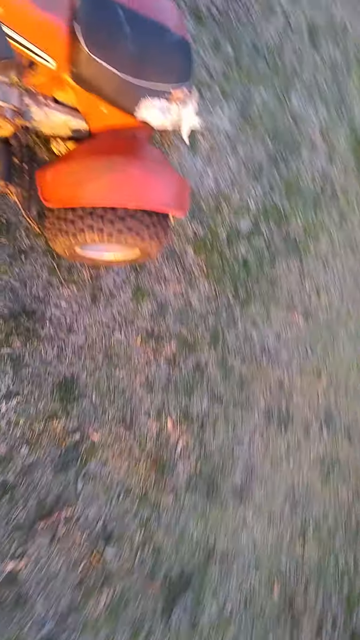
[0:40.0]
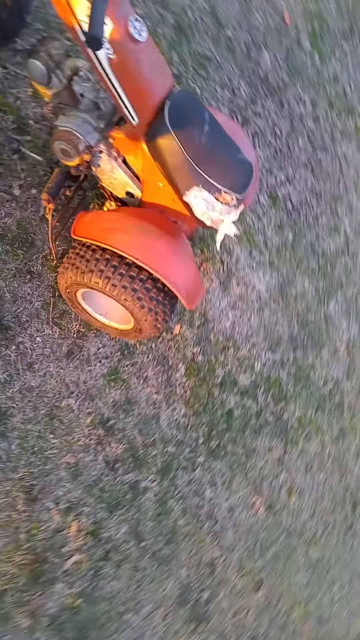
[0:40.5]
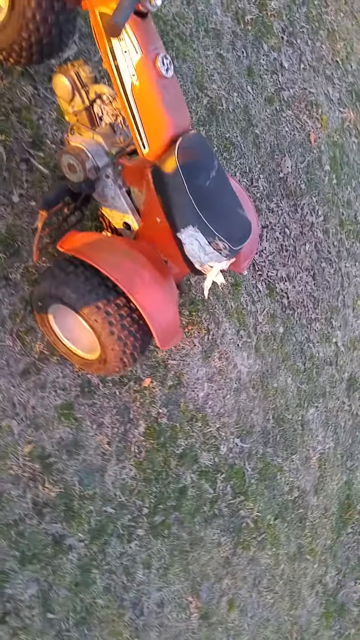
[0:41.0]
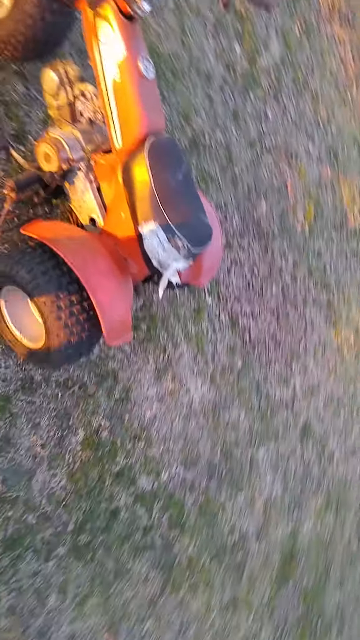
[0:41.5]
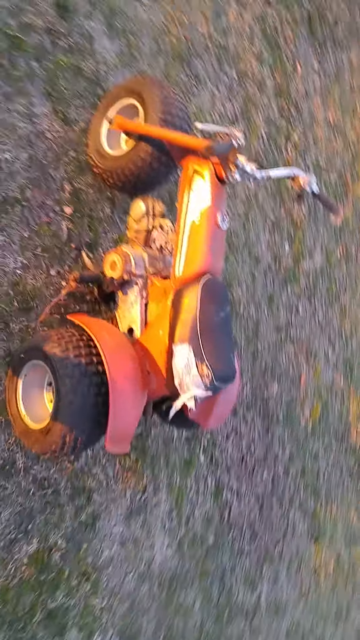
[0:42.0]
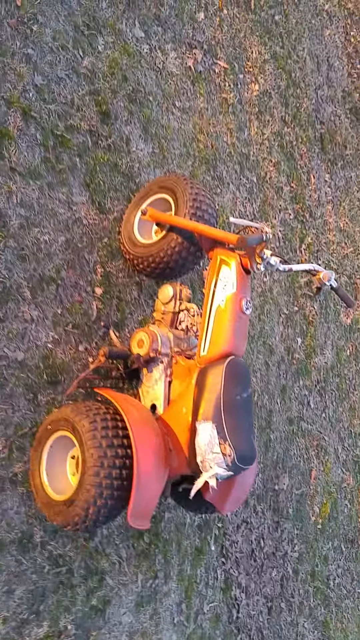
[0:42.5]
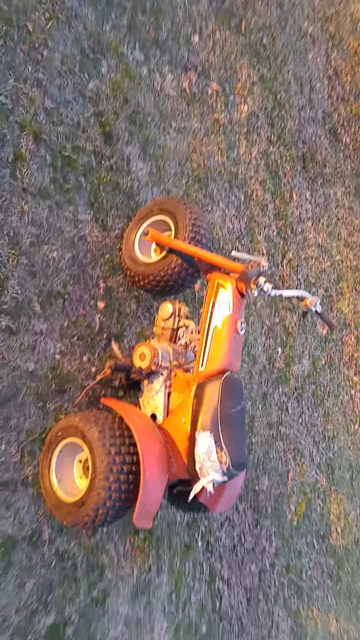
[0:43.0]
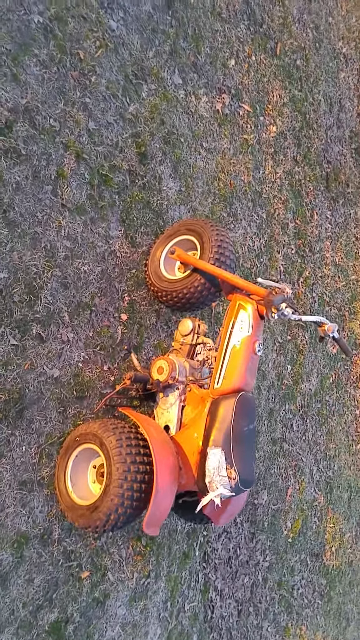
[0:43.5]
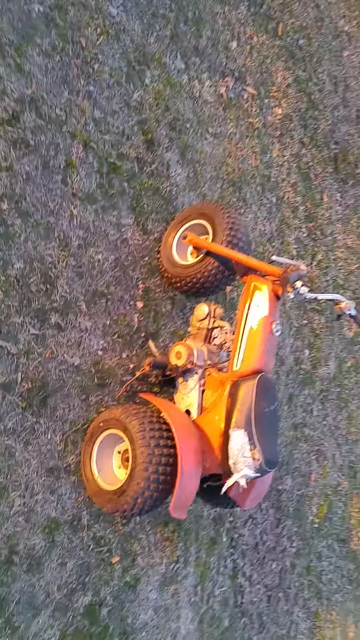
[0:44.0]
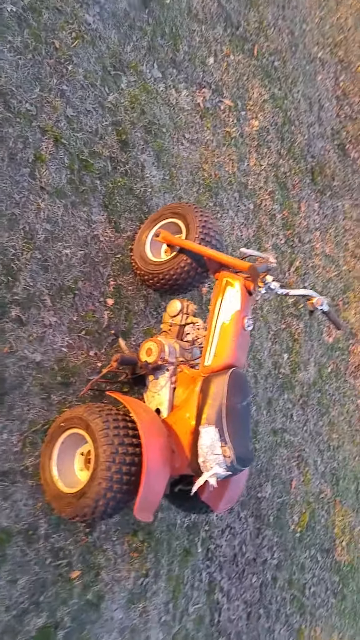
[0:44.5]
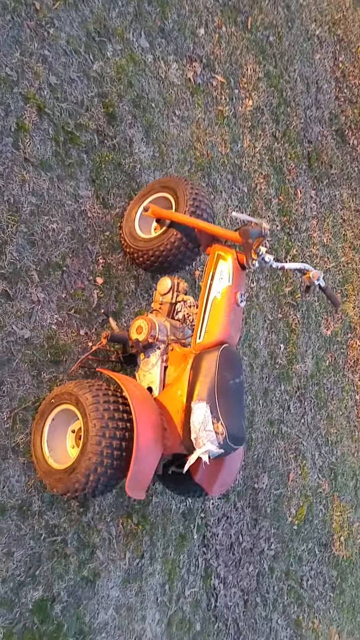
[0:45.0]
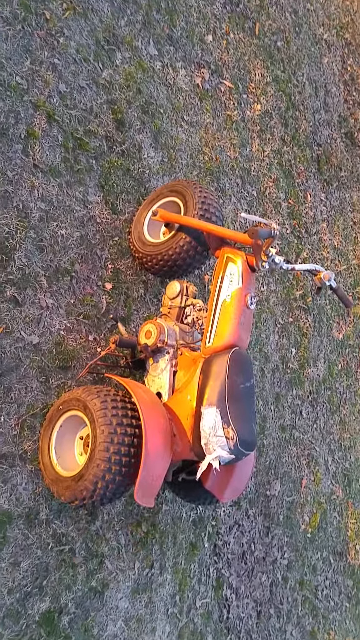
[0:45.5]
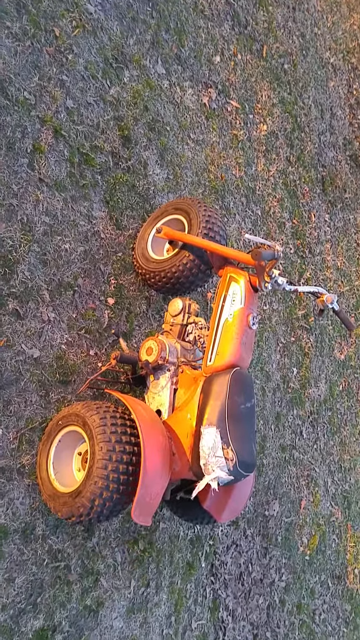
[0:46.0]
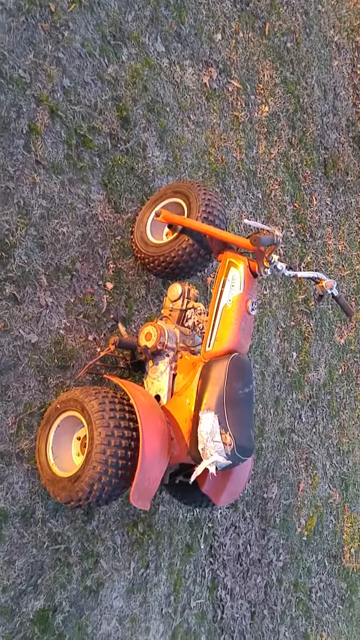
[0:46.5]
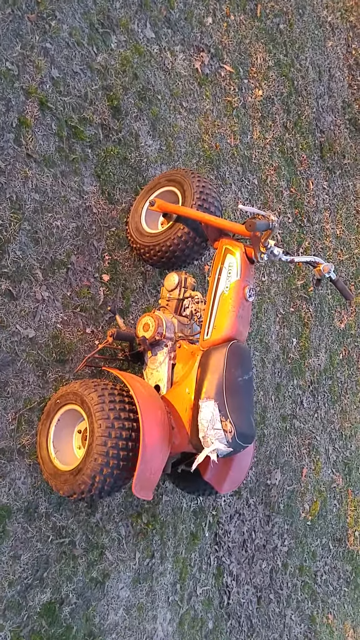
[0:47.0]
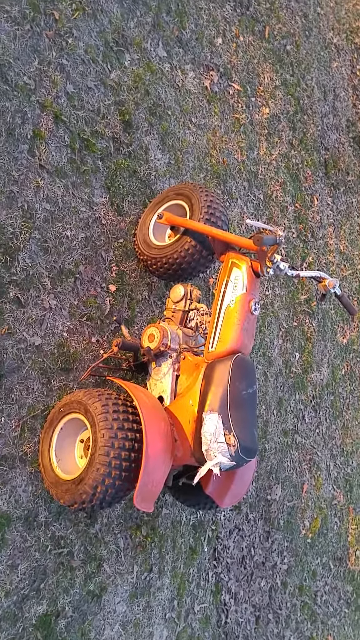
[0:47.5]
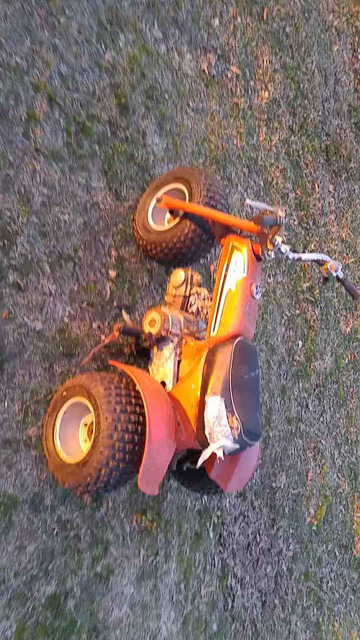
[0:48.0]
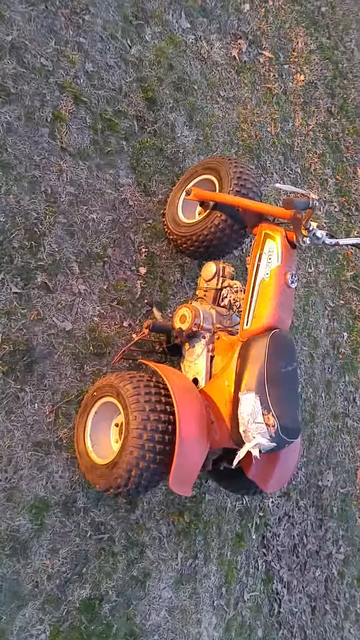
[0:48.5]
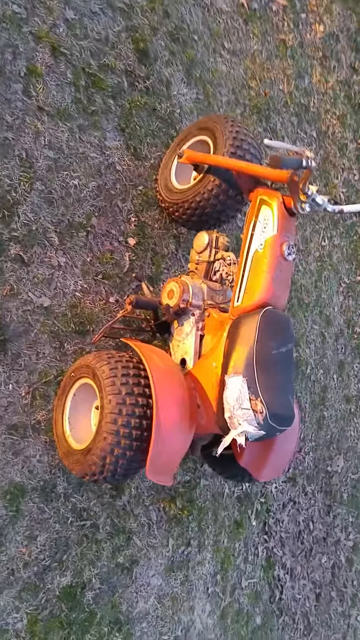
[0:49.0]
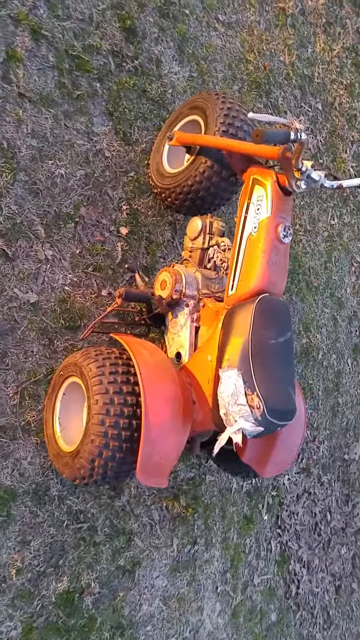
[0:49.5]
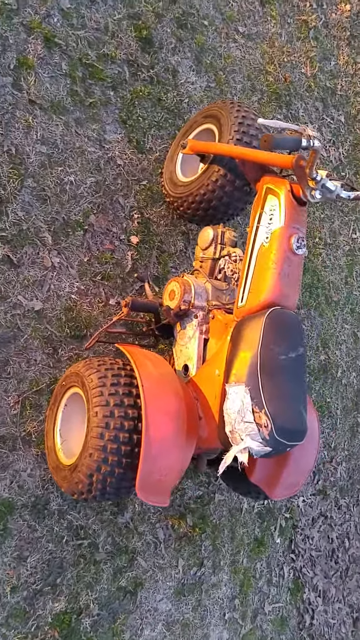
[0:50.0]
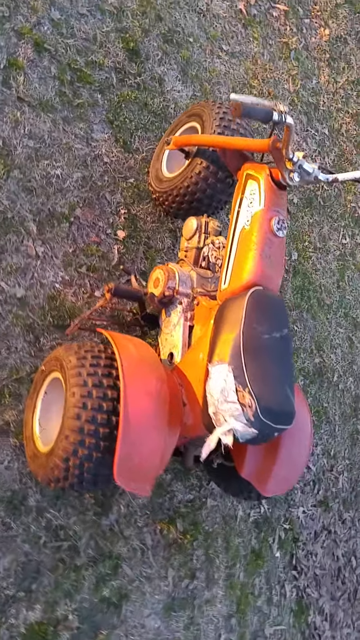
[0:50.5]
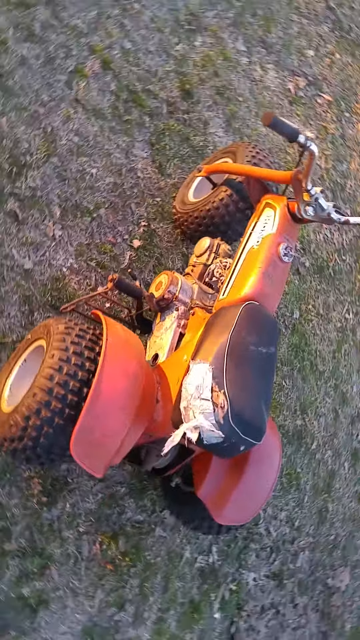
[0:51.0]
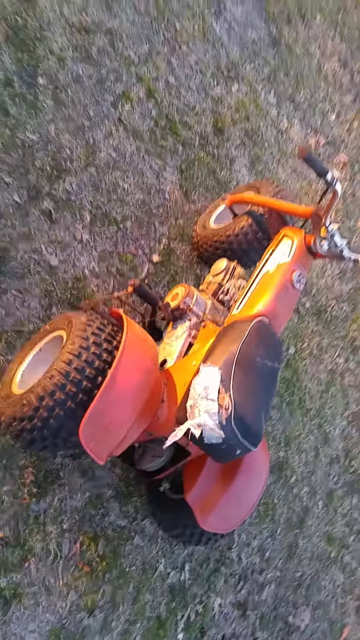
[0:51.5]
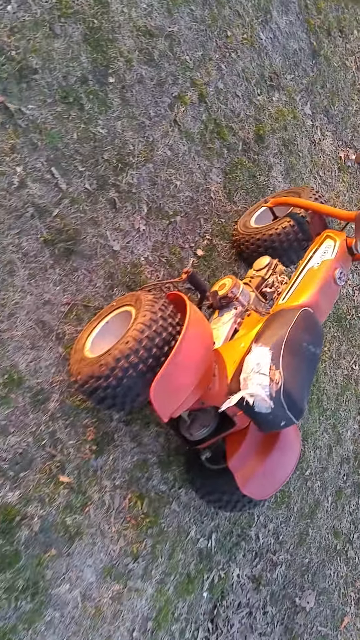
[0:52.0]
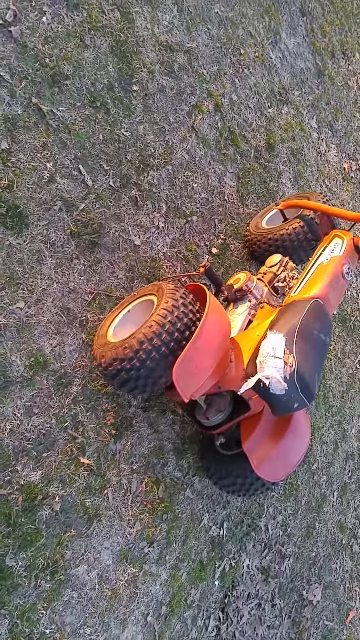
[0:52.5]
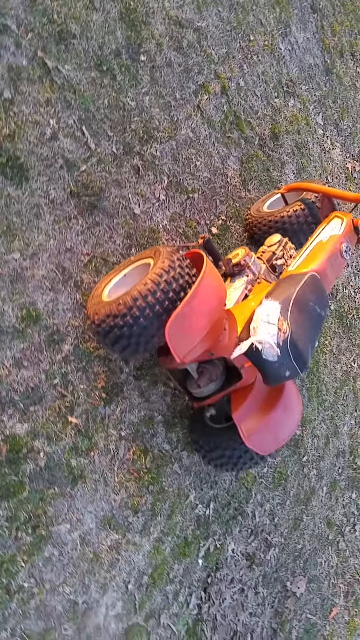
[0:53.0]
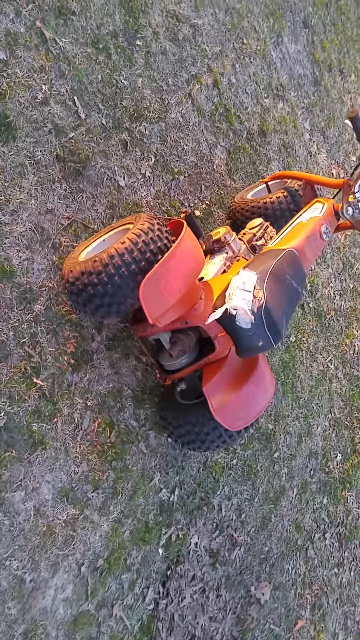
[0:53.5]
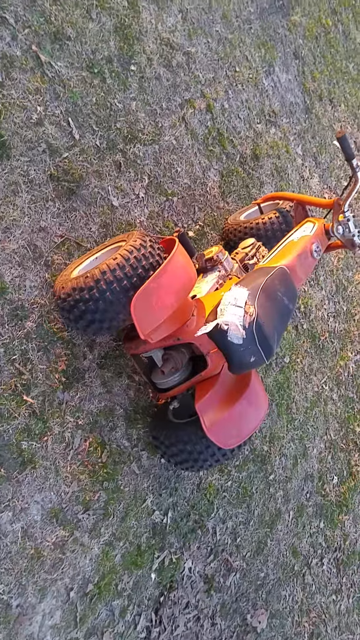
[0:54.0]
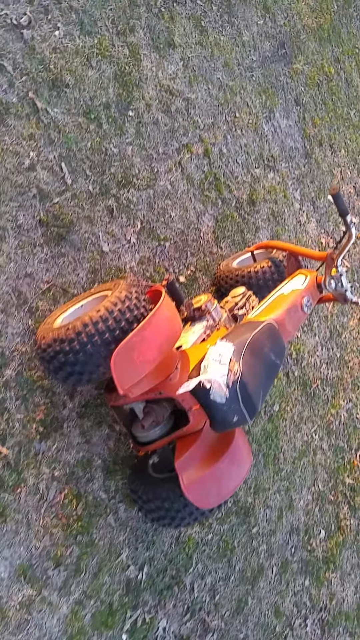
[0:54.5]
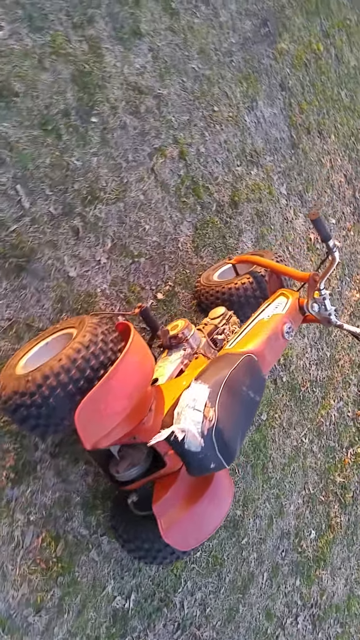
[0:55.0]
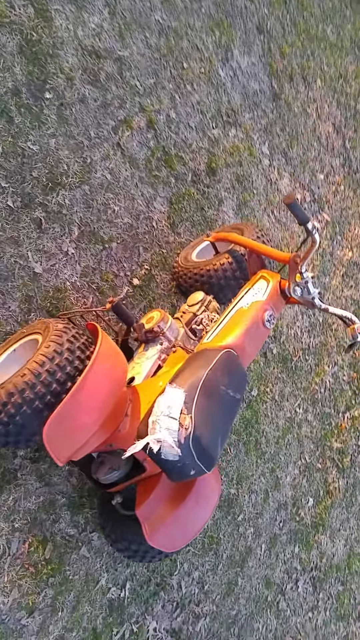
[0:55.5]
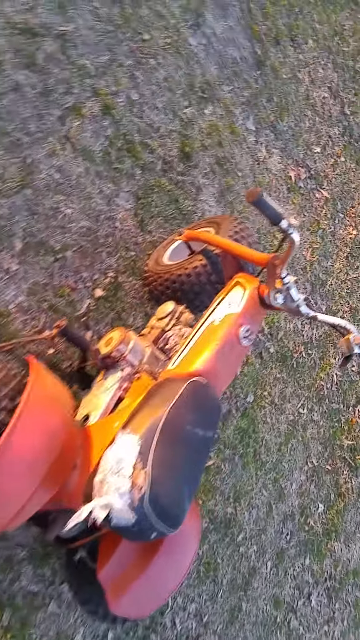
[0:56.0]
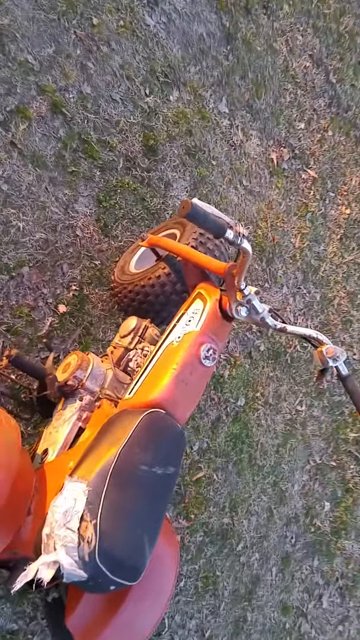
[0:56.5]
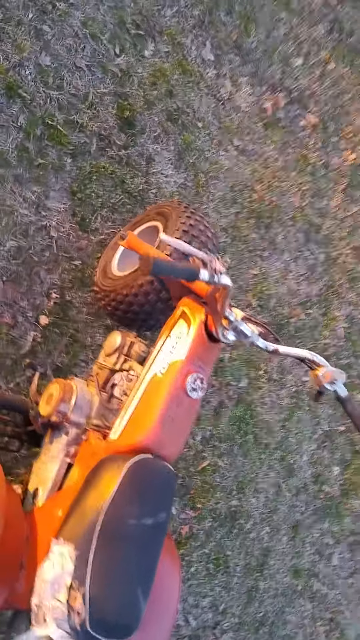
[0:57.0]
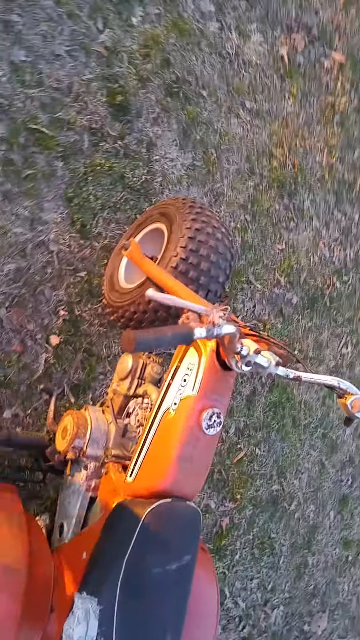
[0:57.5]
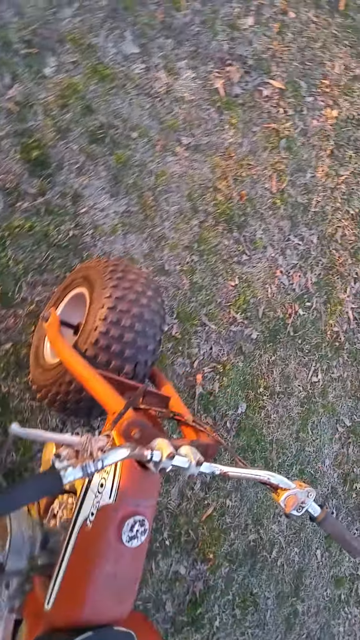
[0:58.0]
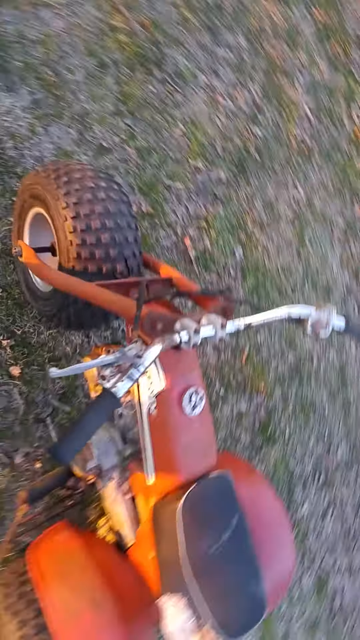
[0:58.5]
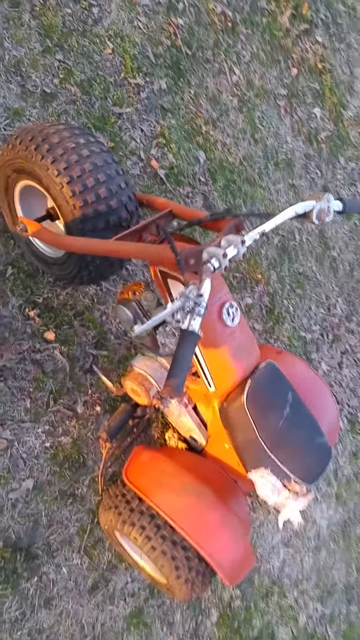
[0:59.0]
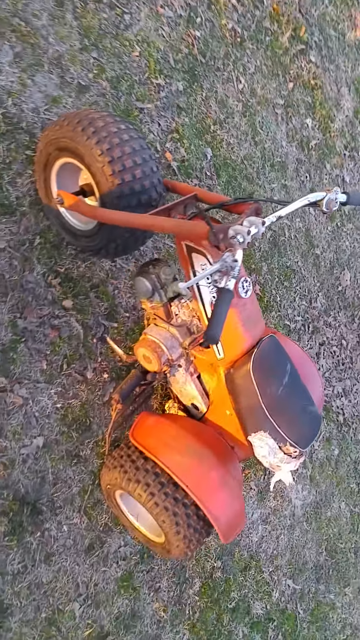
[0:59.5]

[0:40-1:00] The shot begins on the back end of the three-wheeler, showing the black cushion seat and, at first, one tire, the one on the left side. The three-wheeler faces the left side of the frame and is parked in some grass. Nothing else is visible: no people, no children, no animals. The camera moves around, showing different views of the stationary three-wheeler, which no one is riding. The camera is held over the top of it, looking down at the front tire, the back left tire, the back right tire, and the half-dead grass. Most of the grass is dead, with a few areas of green grass.